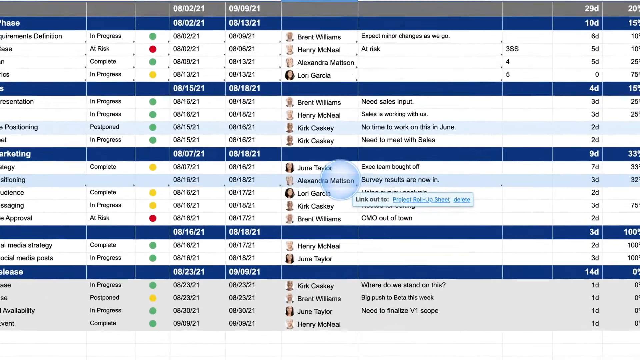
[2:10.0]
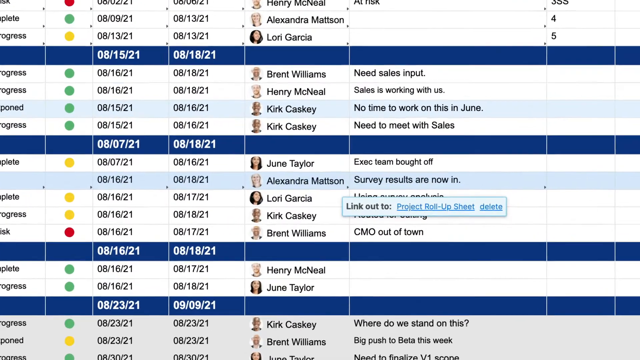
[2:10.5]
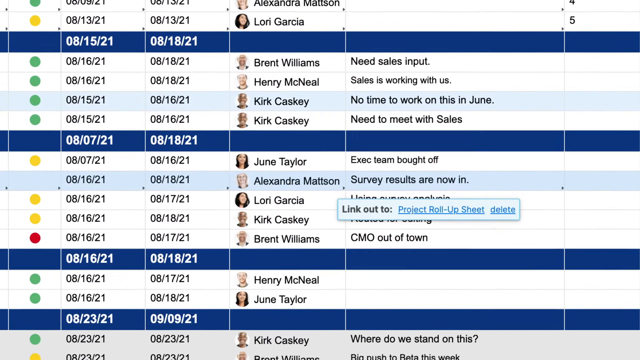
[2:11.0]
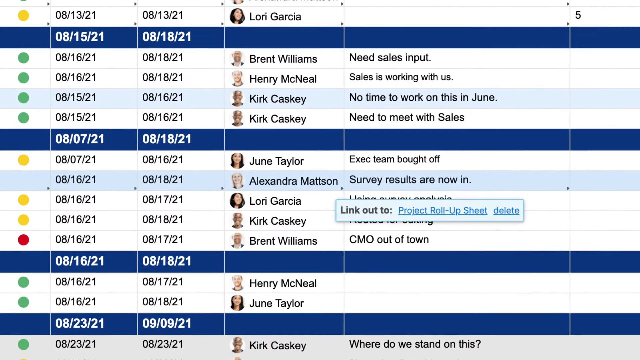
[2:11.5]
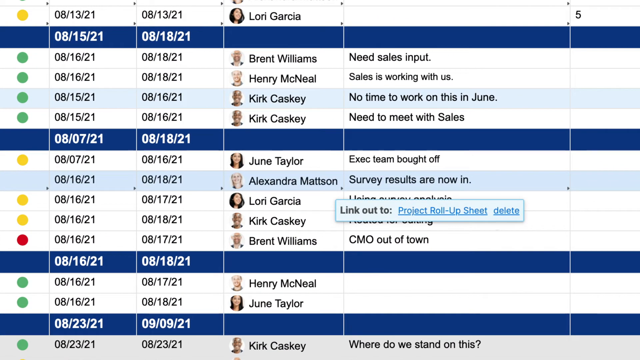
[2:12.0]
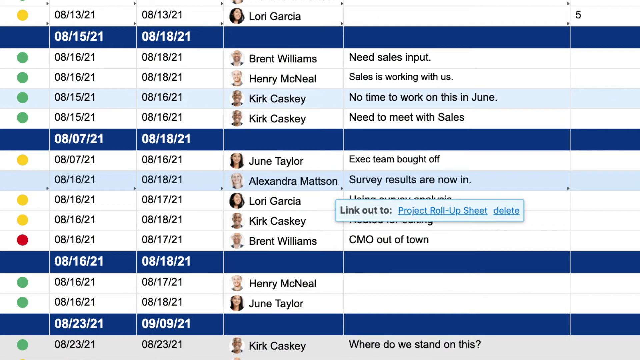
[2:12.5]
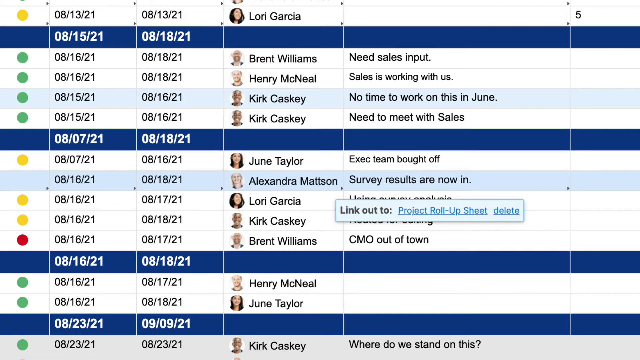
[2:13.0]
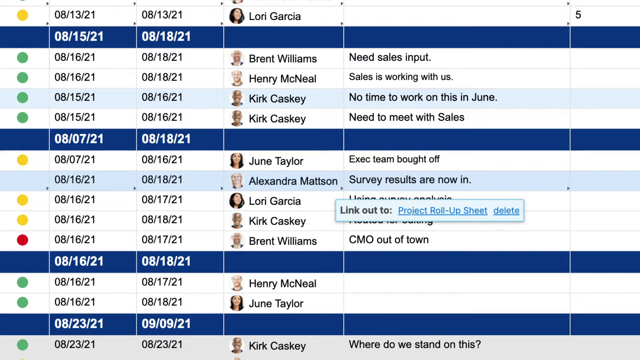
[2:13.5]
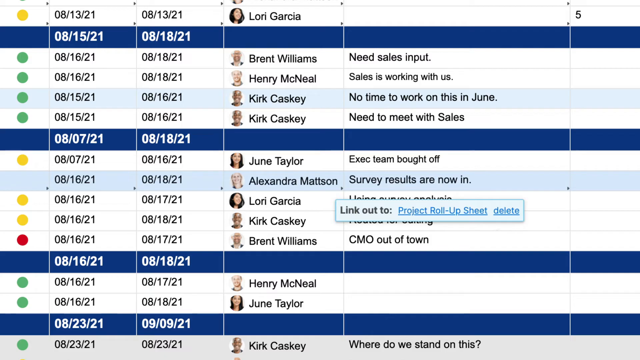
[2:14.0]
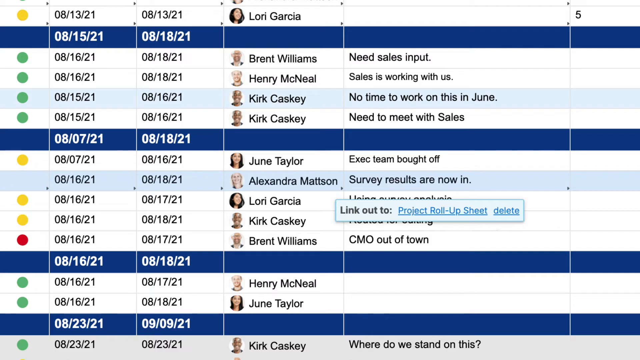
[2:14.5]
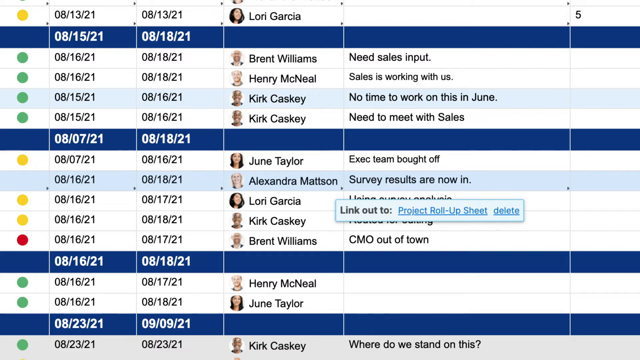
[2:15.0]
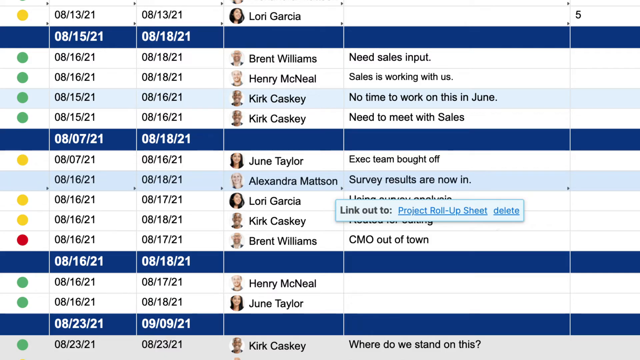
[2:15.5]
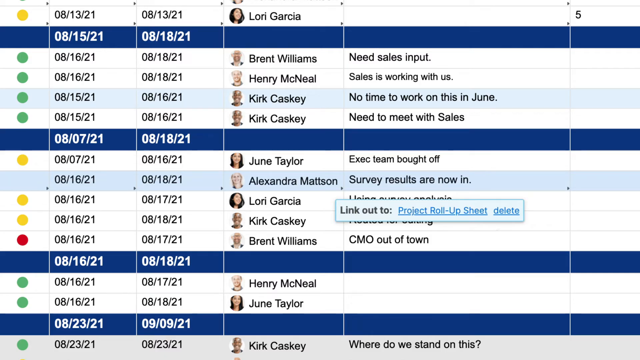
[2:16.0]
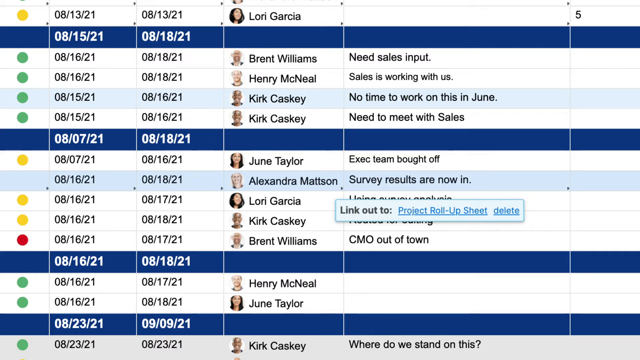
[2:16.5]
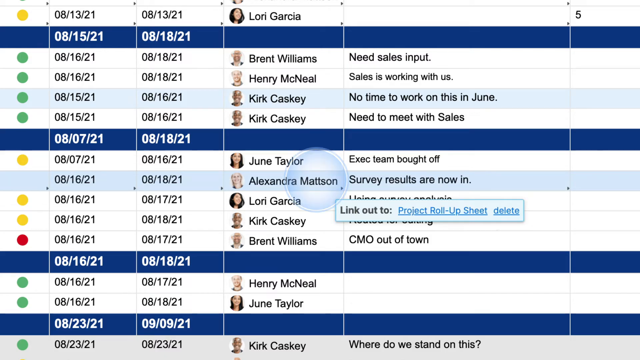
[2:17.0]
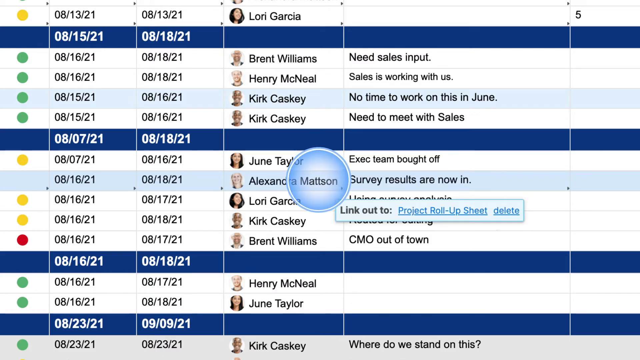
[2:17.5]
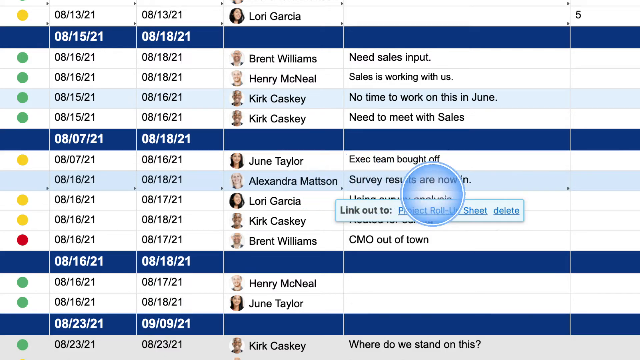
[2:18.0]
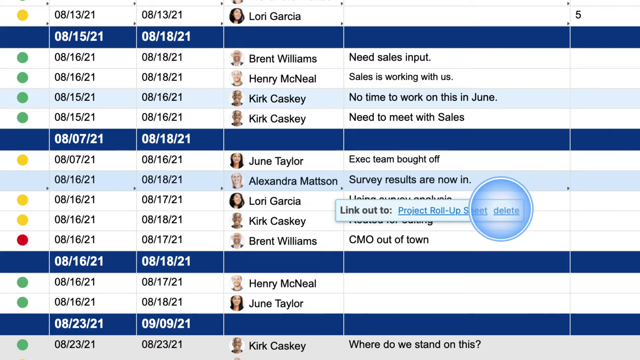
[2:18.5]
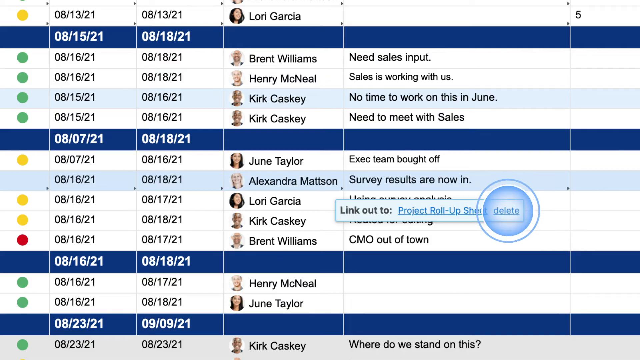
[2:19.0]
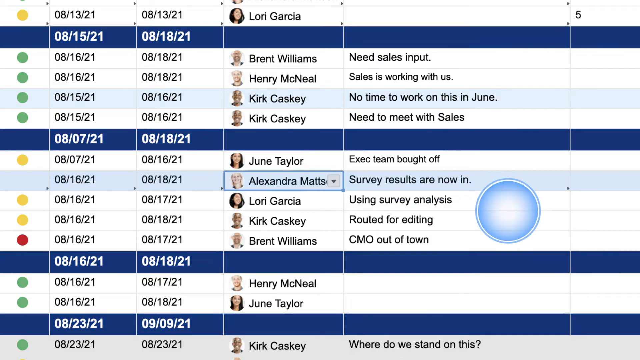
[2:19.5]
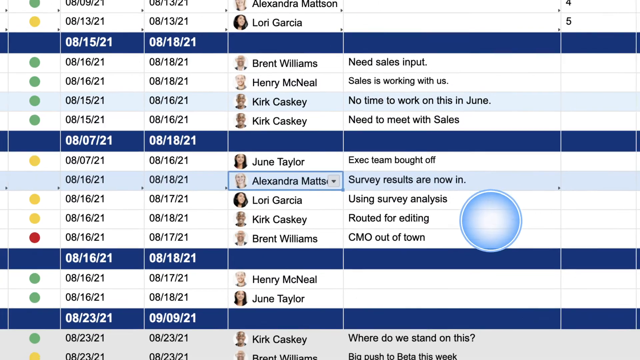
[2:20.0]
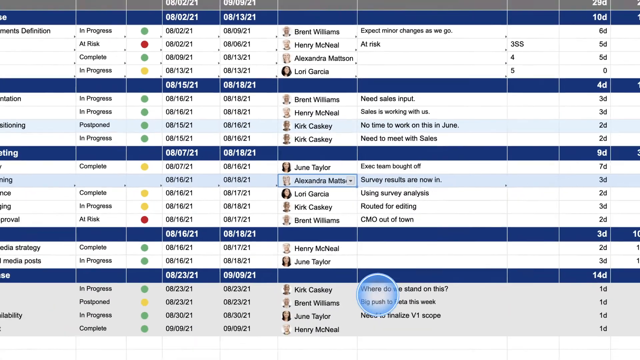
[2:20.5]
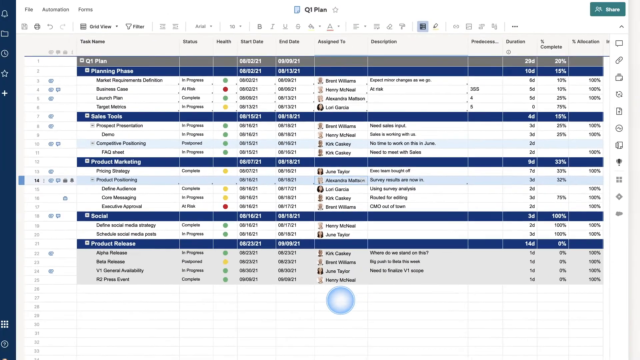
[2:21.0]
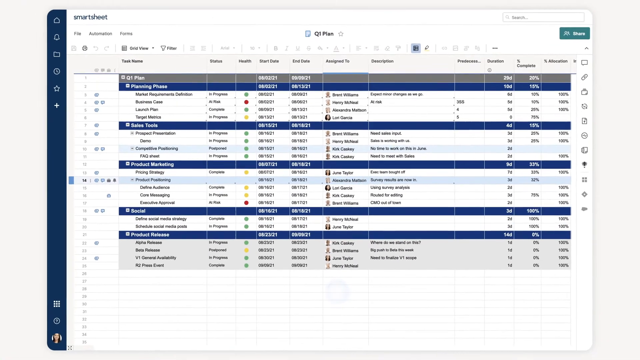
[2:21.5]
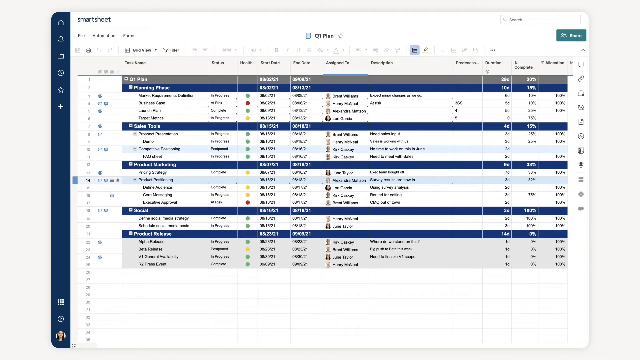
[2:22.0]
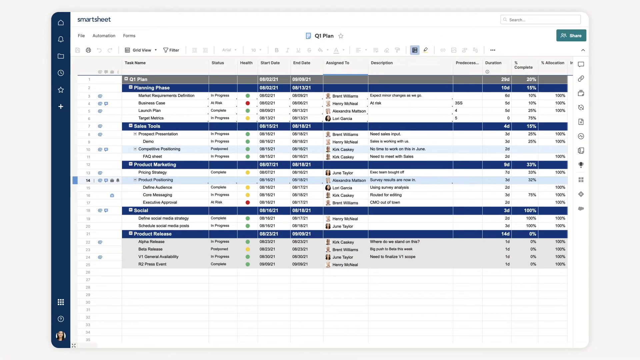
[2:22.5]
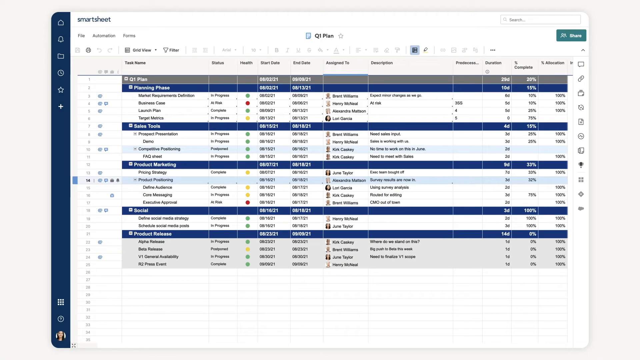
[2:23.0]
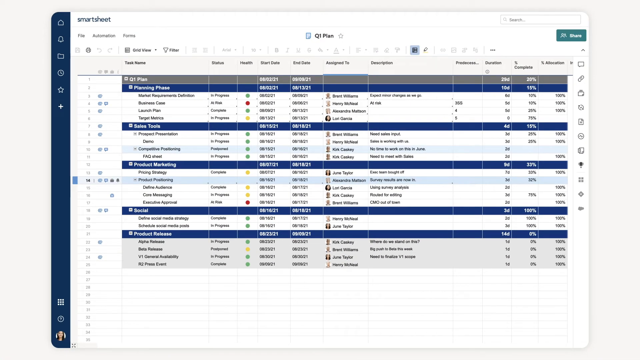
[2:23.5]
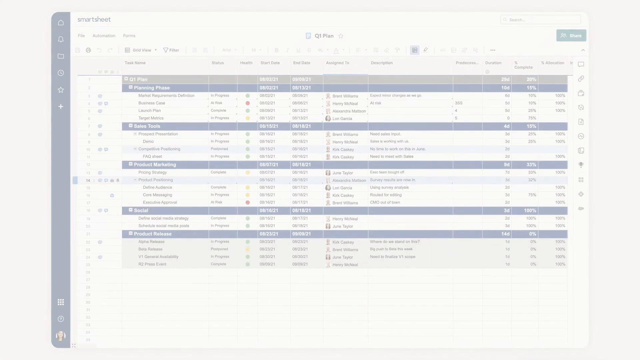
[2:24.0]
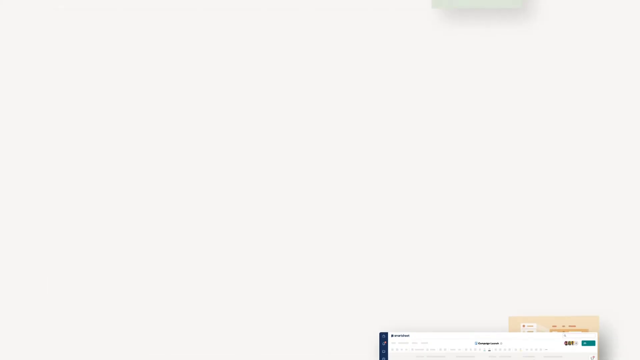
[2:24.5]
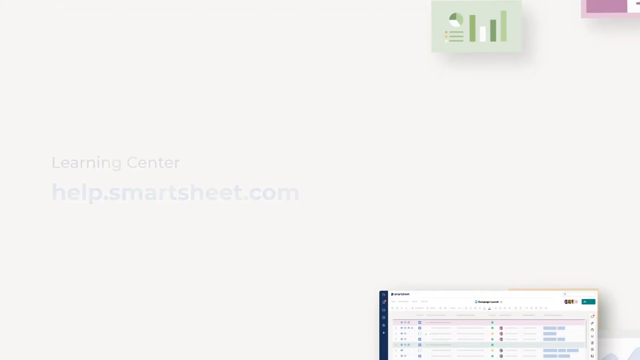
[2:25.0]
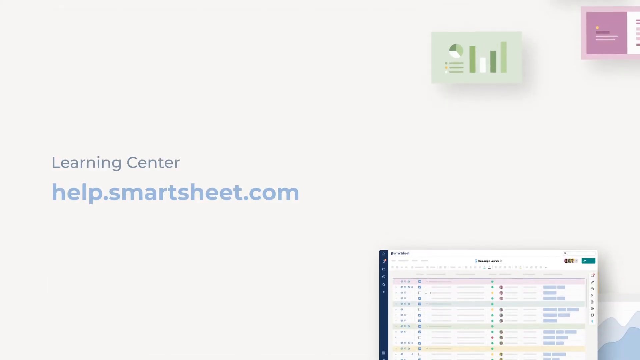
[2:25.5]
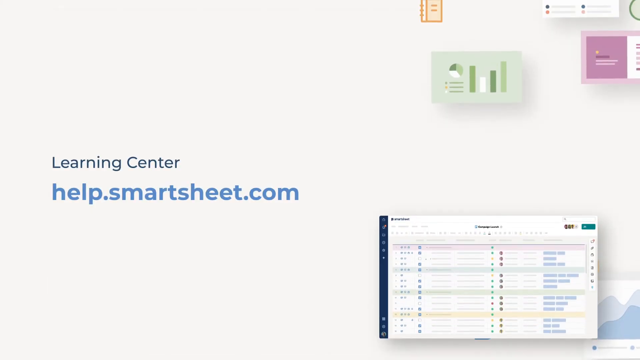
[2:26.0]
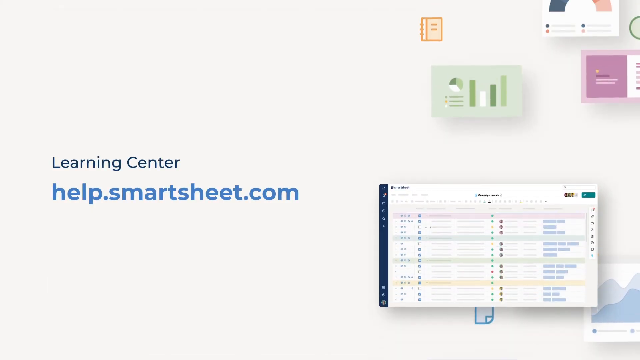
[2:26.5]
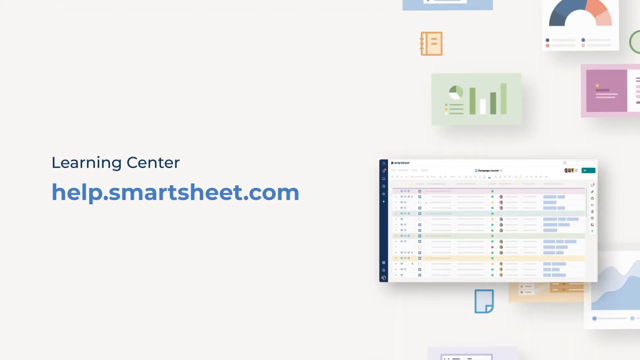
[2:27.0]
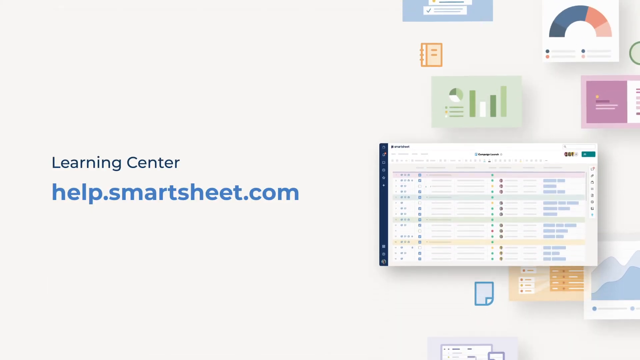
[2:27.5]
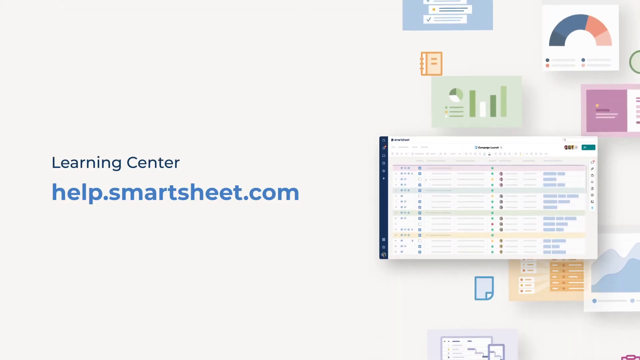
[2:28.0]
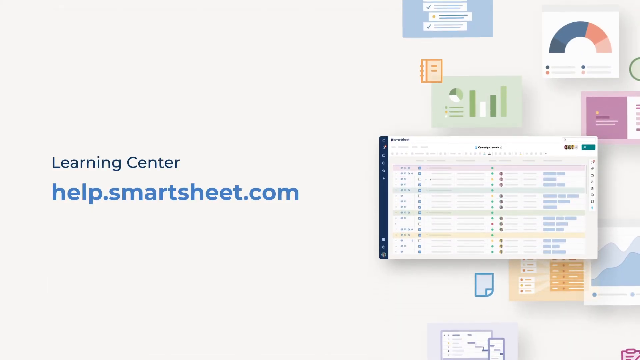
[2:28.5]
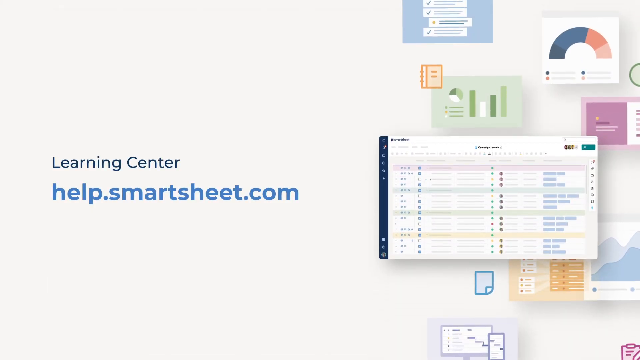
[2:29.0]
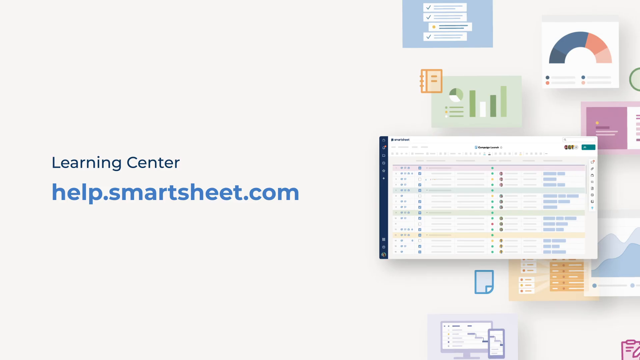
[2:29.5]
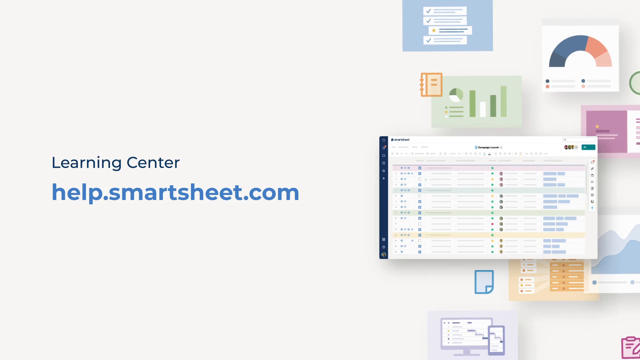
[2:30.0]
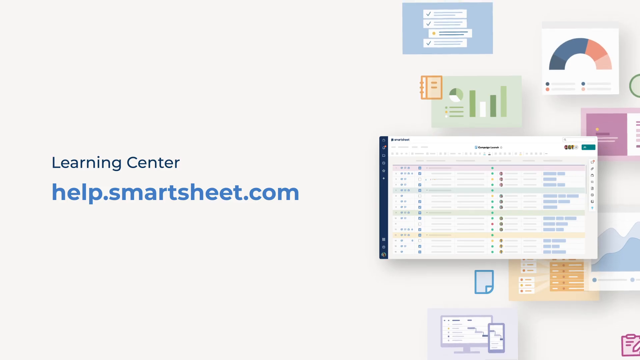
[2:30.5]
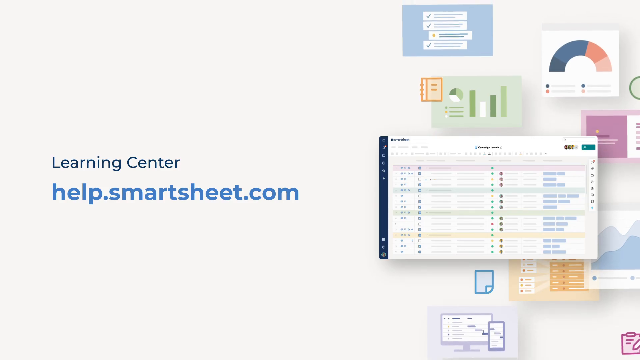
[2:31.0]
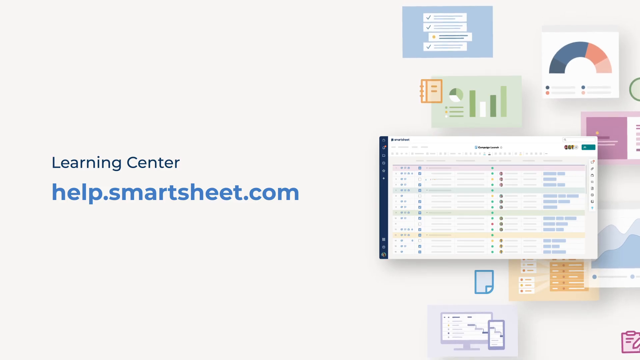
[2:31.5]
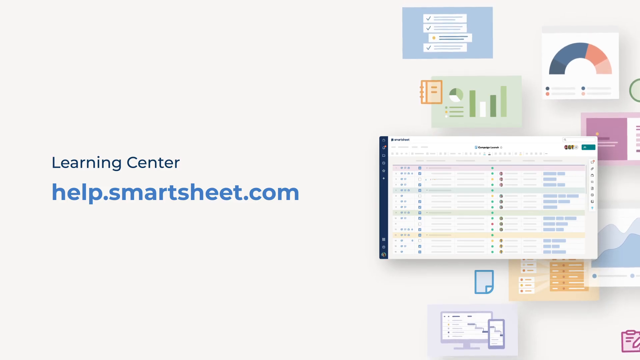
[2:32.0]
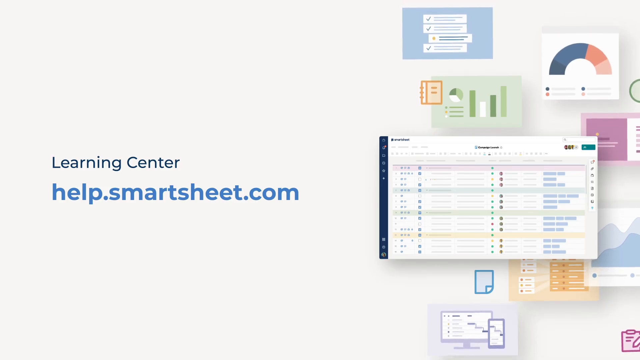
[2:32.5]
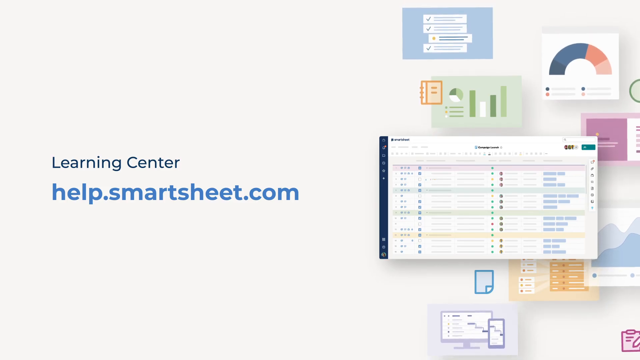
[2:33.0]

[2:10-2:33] There appears to be a link that says "link out to Project Rollup Sheet," along with an option to delete it. Something is deleted, and the Q1 plan remains on screen while things are edited. The Q1 plan page lists people including Lori Garcia, Brent Williams, Henry McNeil, Kirk Caskey, Alexandra Mattson and June Taylor, apparently the main team members, with comments entered. At the end, the screen says "learningcenterhelp.smartsheet.com."